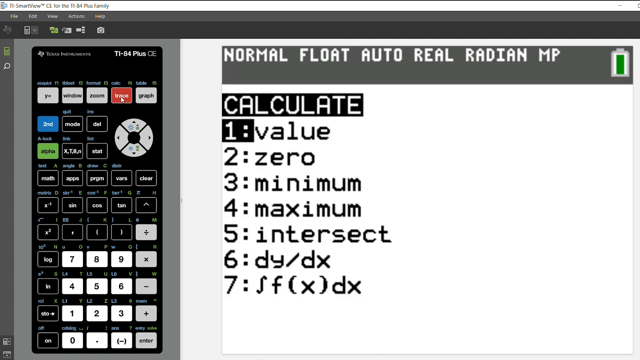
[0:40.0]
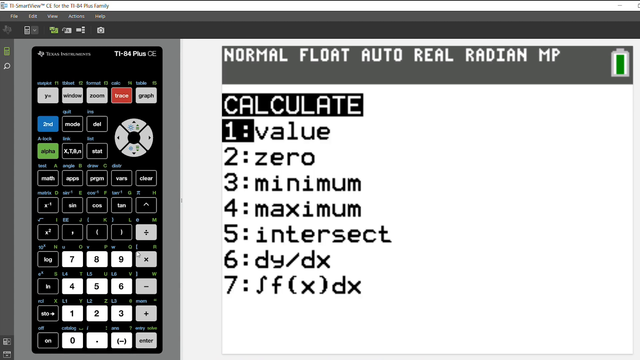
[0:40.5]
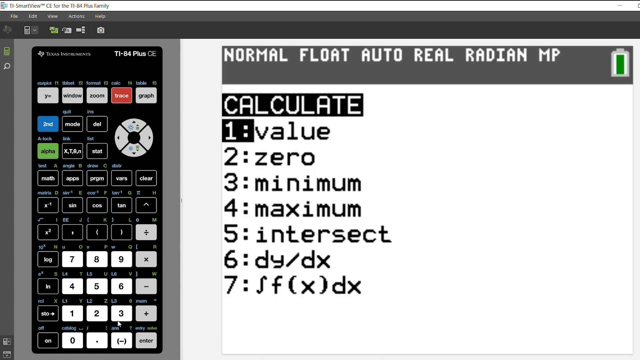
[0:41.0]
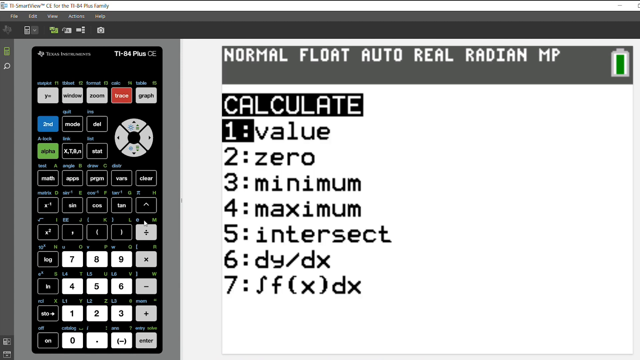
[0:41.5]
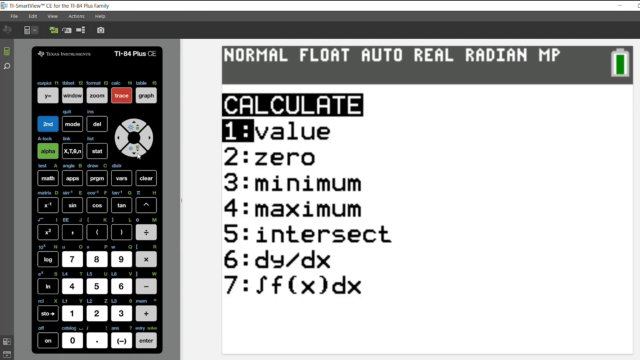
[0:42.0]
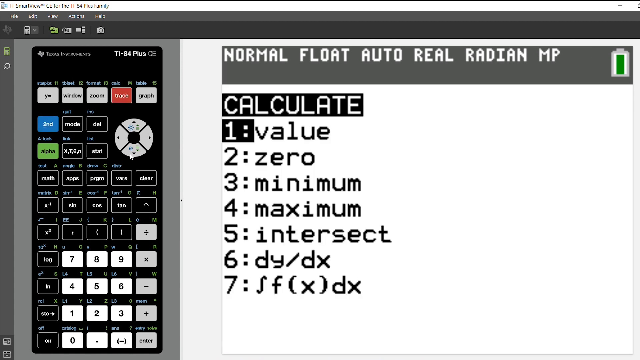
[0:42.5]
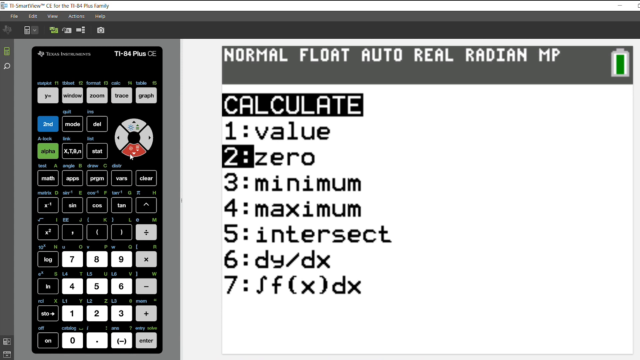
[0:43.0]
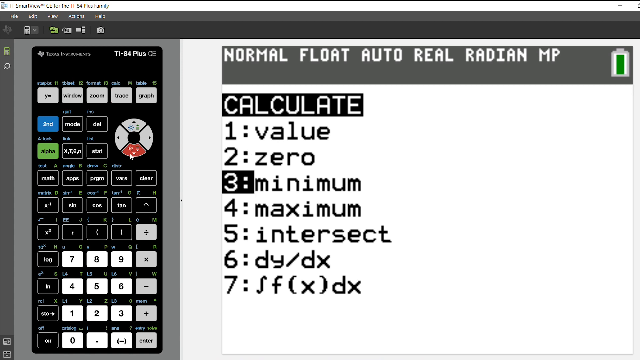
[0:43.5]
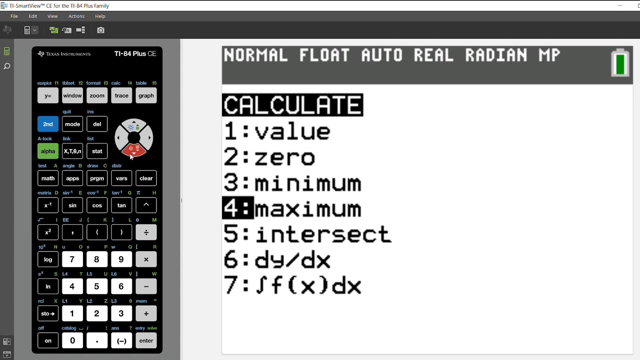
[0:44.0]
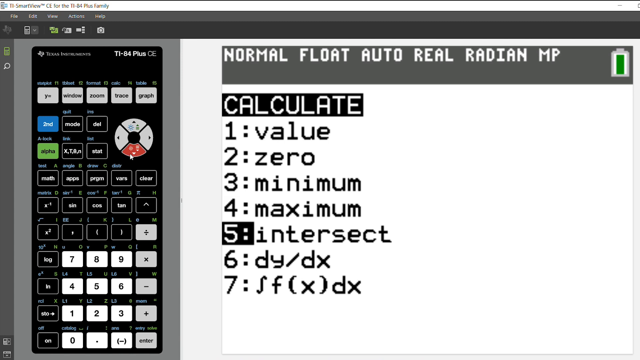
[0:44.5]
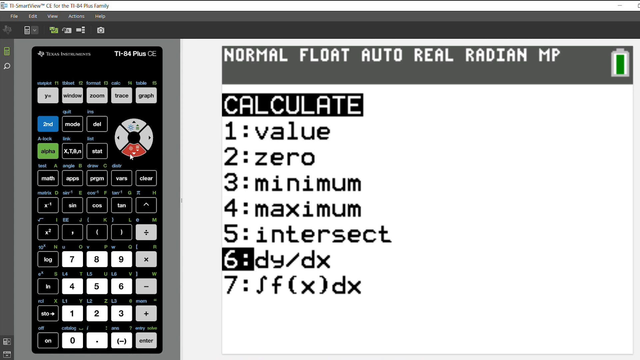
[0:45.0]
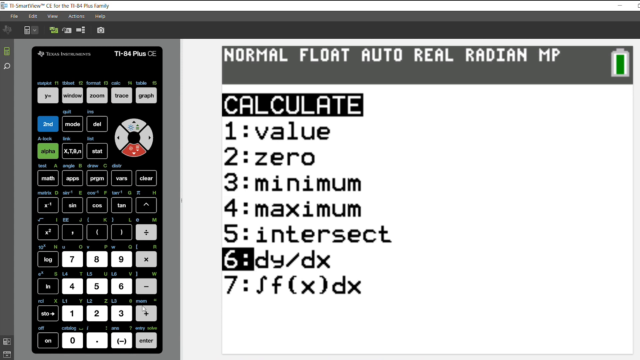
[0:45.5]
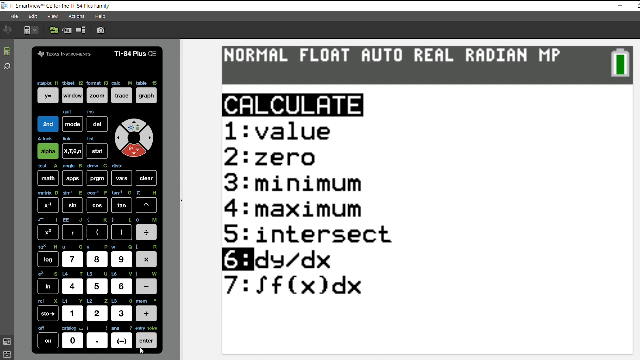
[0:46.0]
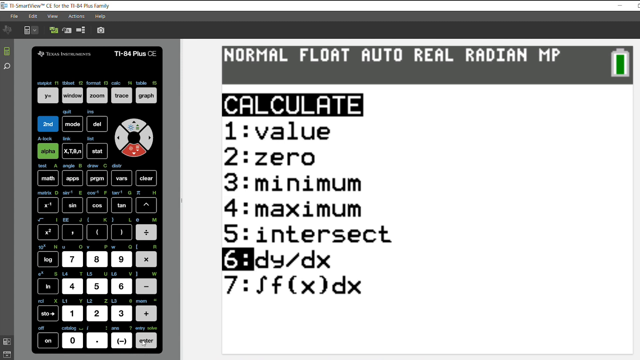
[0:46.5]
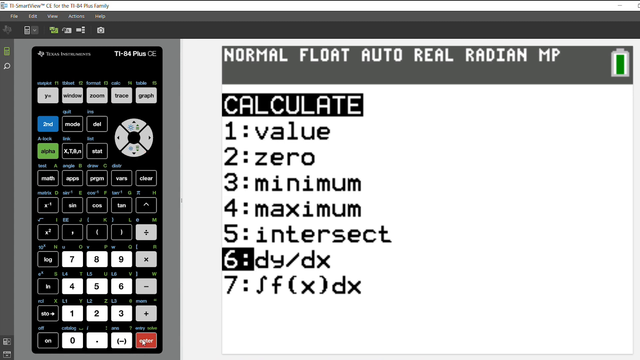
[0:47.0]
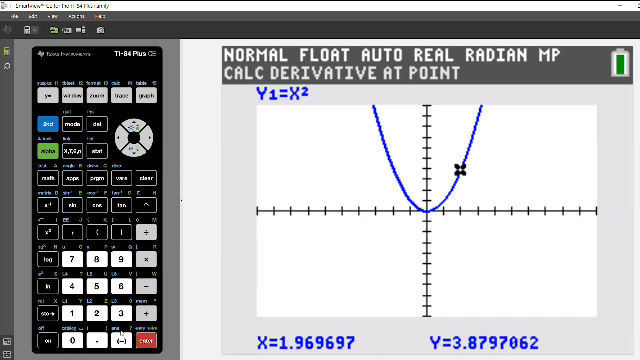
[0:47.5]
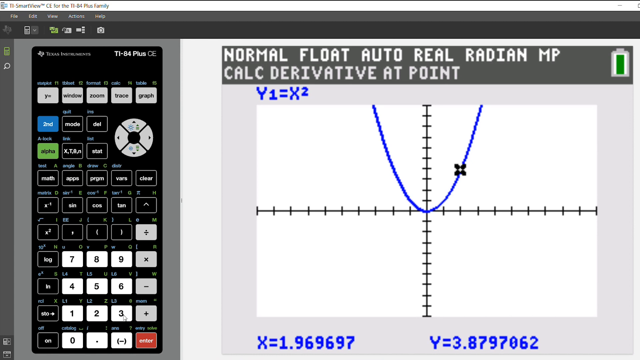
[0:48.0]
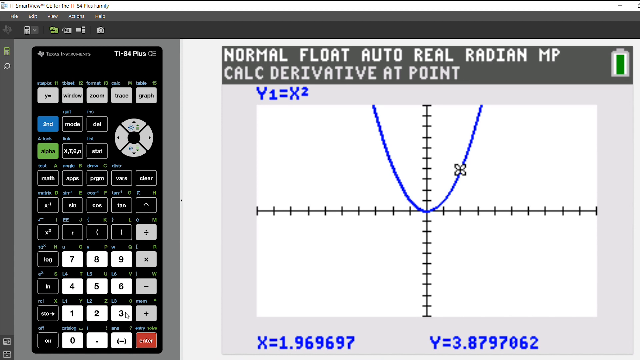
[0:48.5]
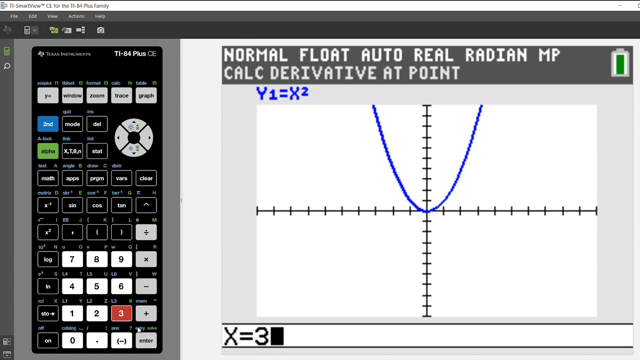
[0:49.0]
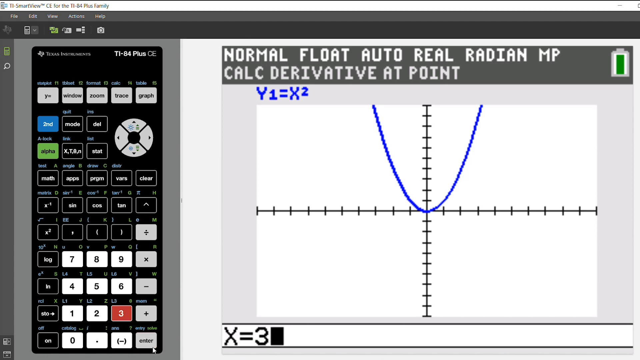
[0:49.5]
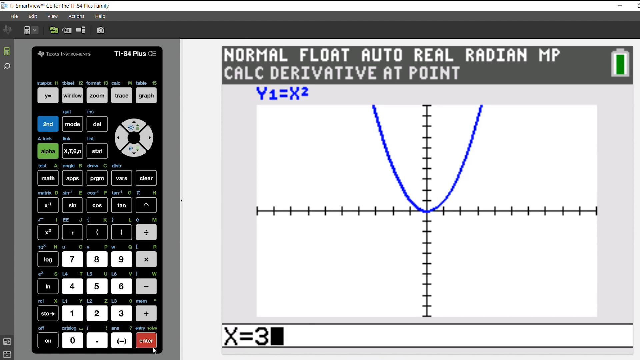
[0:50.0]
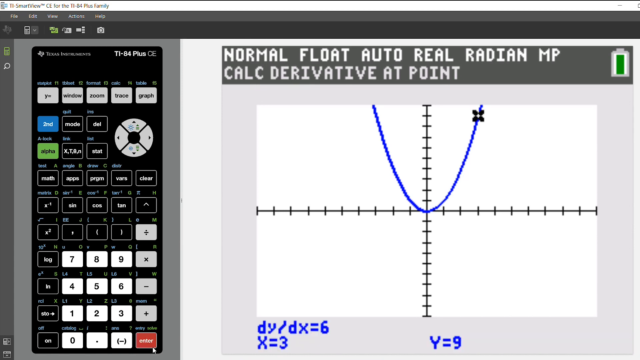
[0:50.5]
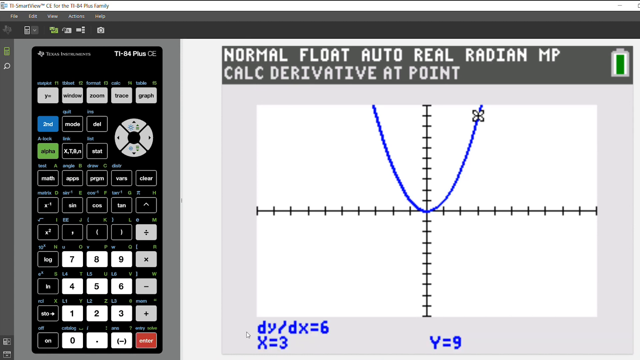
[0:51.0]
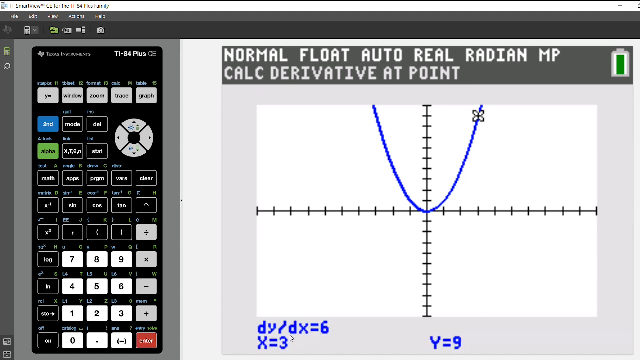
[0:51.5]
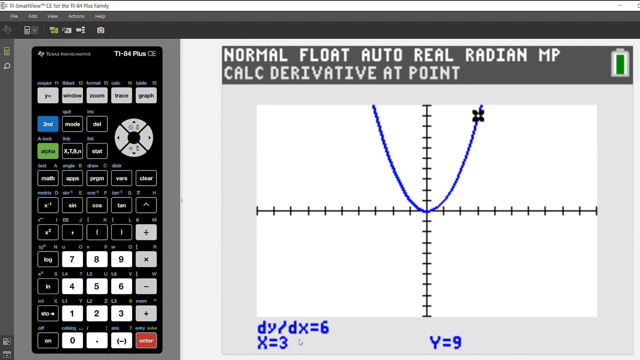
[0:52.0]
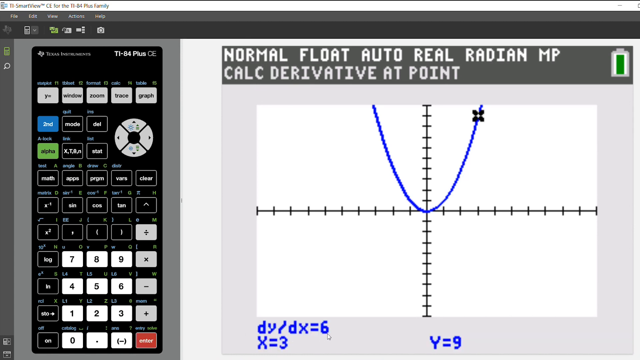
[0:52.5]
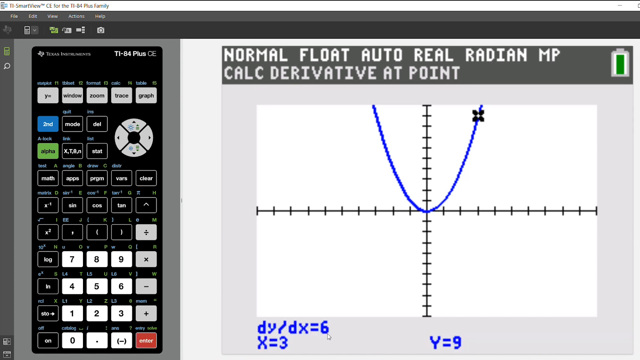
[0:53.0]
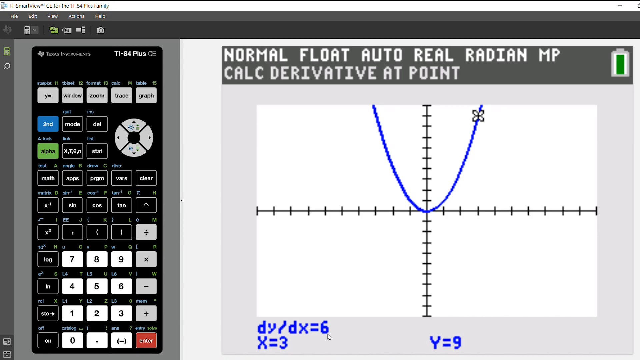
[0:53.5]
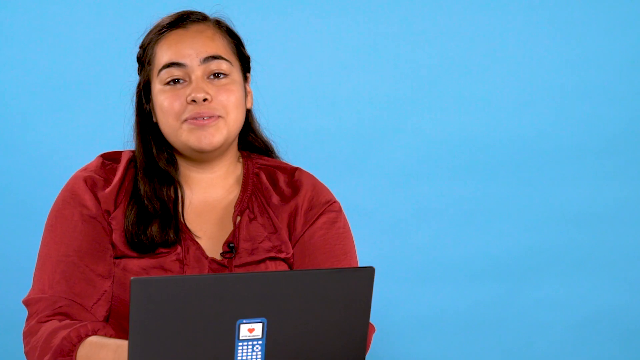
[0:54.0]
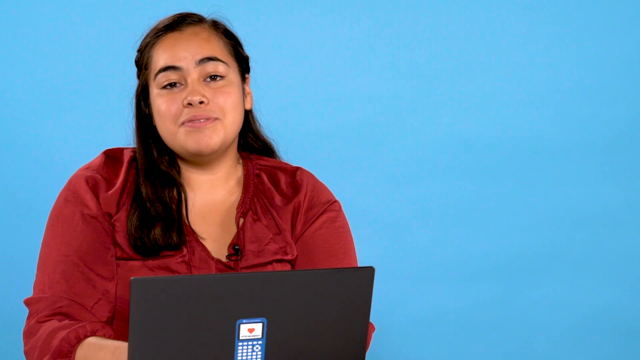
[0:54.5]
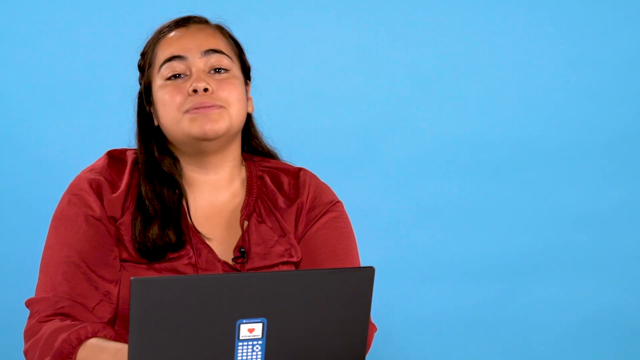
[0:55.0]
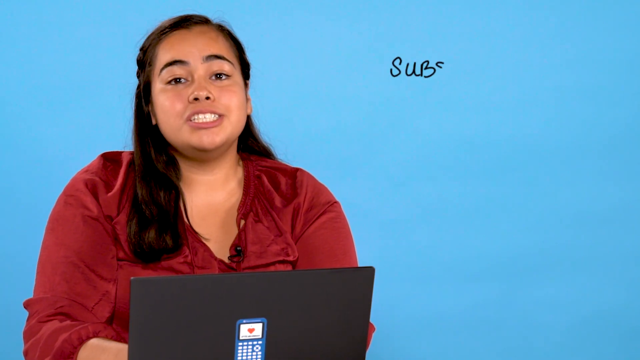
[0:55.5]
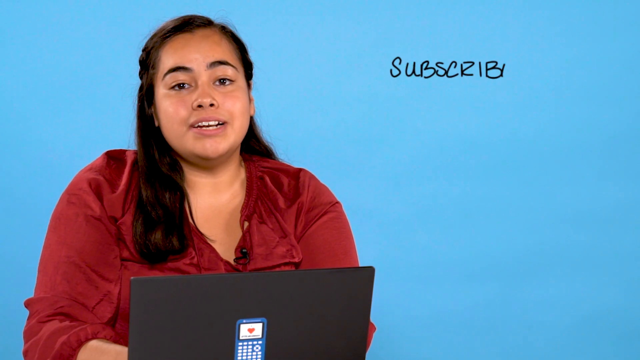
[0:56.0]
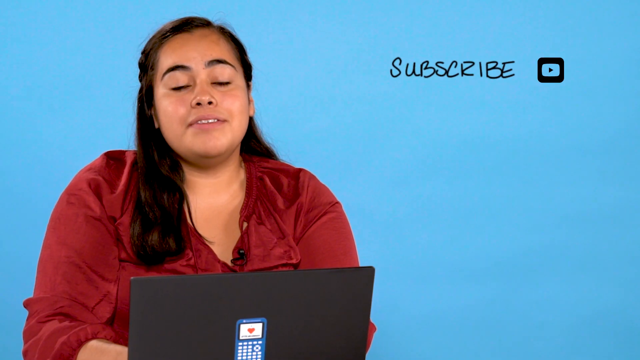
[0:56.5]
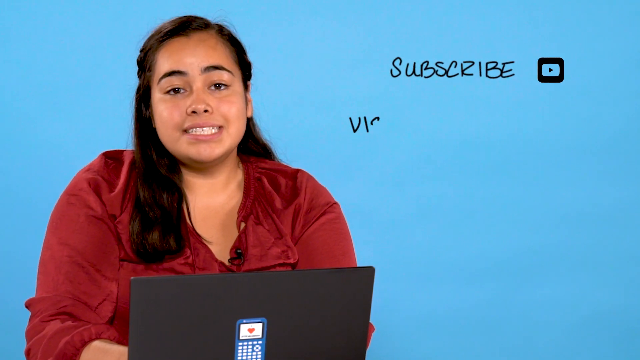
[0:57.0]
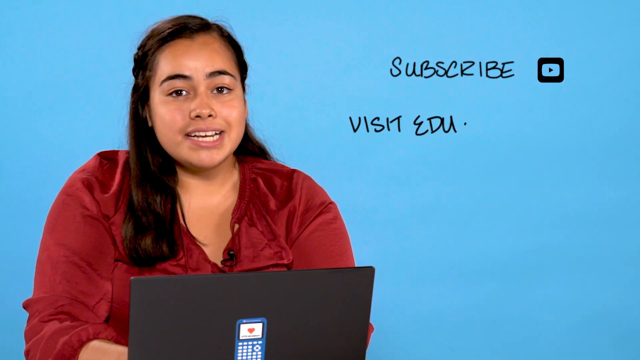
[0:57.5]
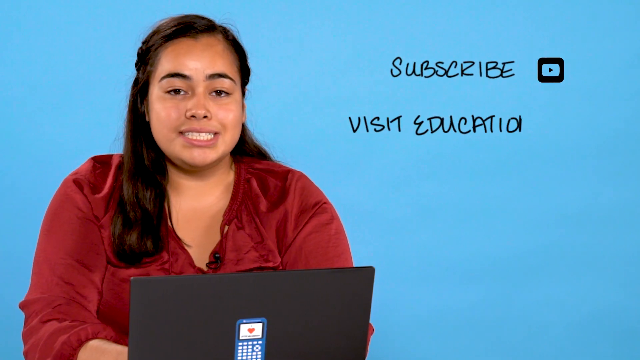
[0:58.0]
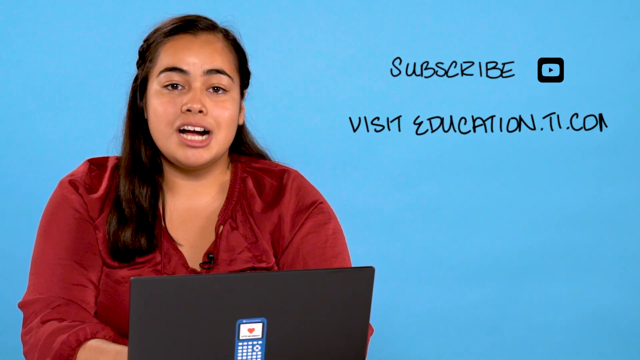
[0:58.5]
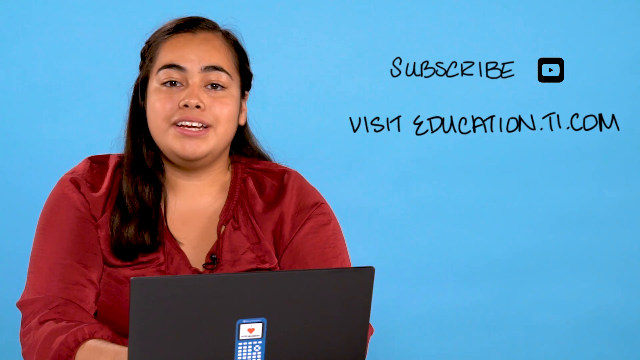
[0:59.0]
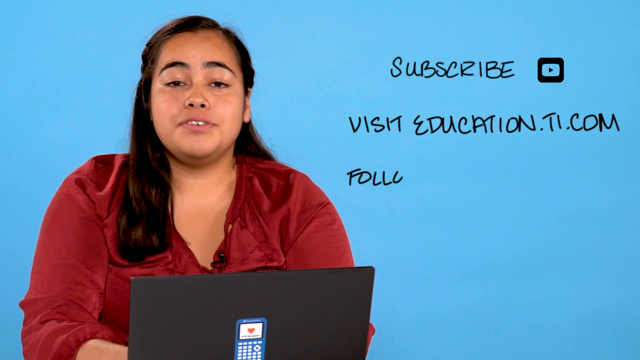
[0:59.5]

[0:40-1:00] Calculations are shown that include value, zero, minimum, maximum and intersection. The scene then changes to a black-and-white graph with a black background and a blue line graph on it, with the calculator on the left-hand side used to calculate the intersect, maximum, minimum and value. The woman asks people to subscribe, and the website education.ti.com is given.